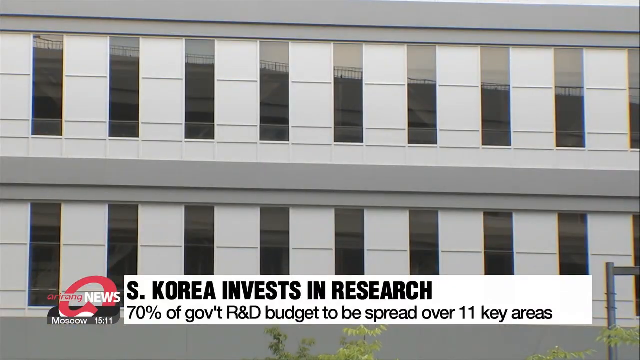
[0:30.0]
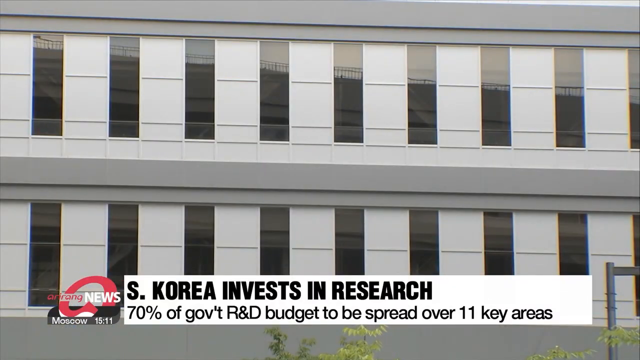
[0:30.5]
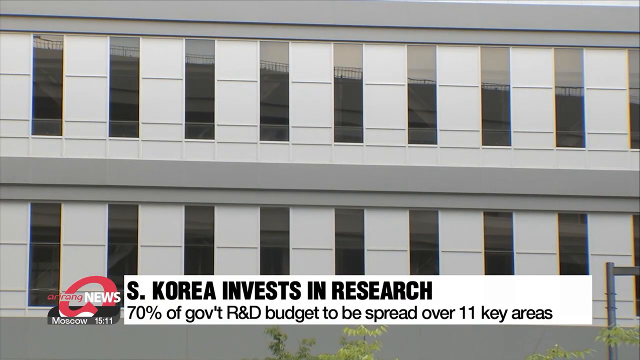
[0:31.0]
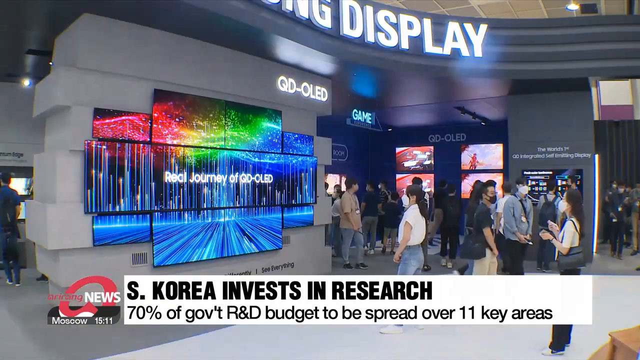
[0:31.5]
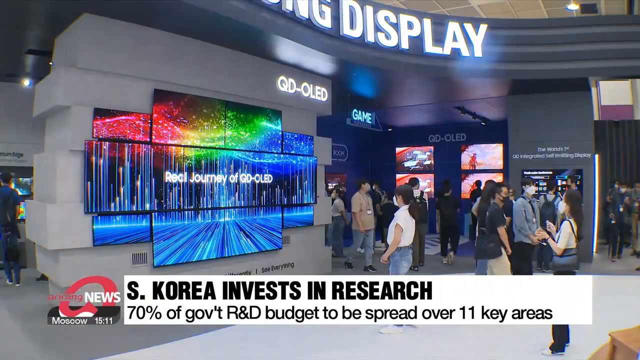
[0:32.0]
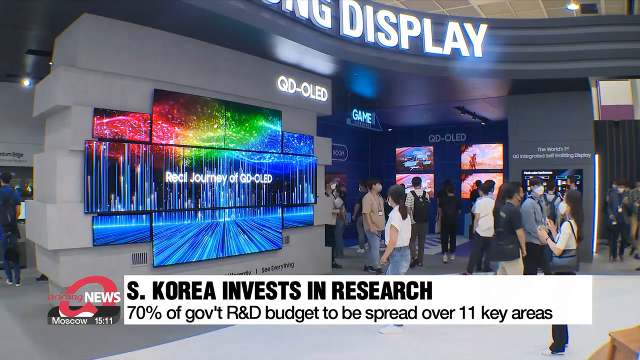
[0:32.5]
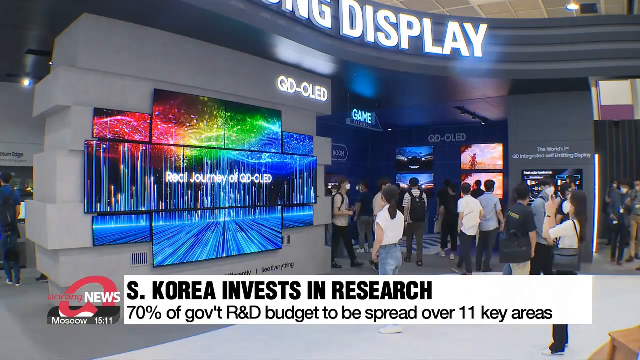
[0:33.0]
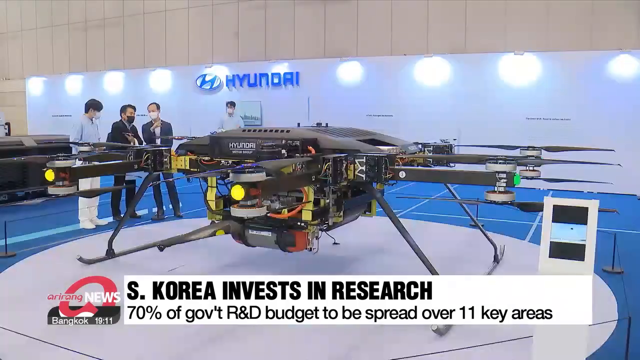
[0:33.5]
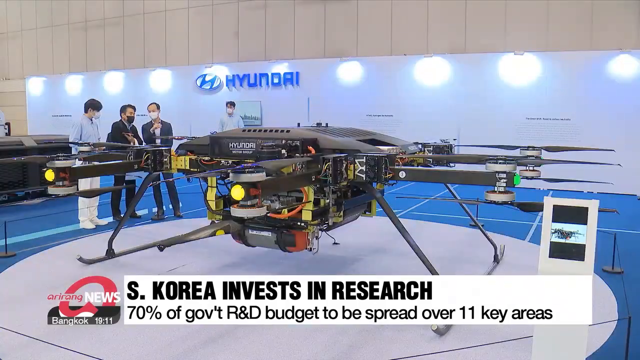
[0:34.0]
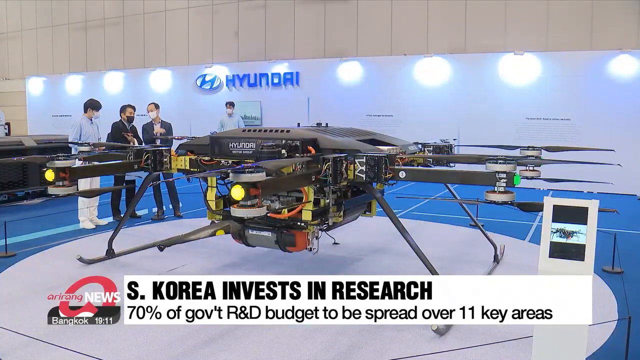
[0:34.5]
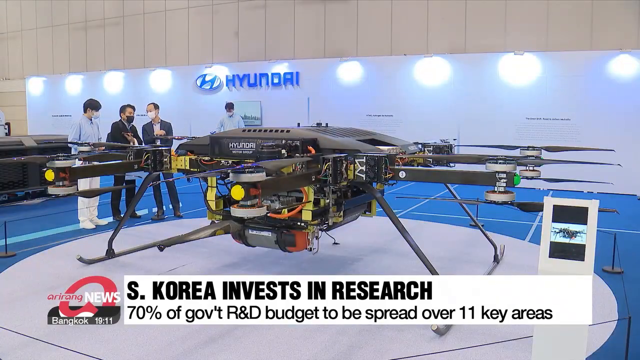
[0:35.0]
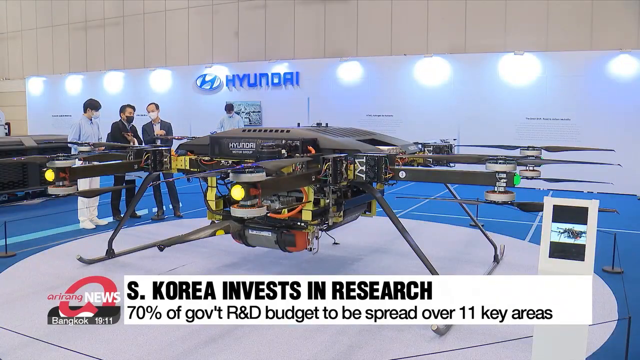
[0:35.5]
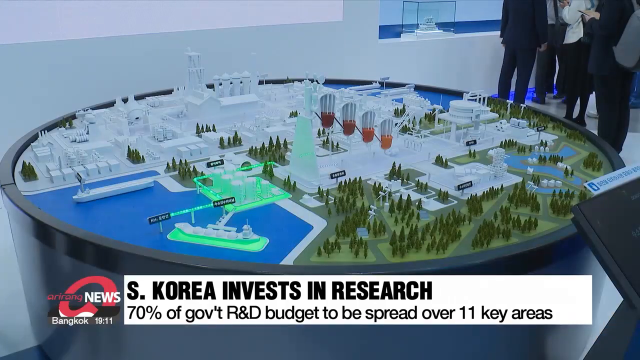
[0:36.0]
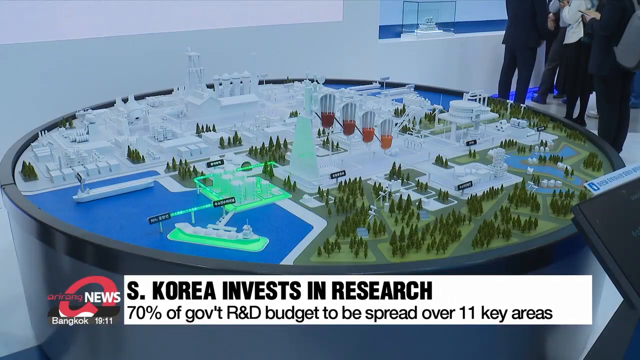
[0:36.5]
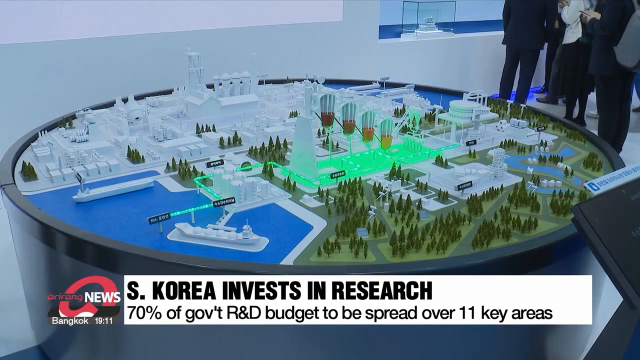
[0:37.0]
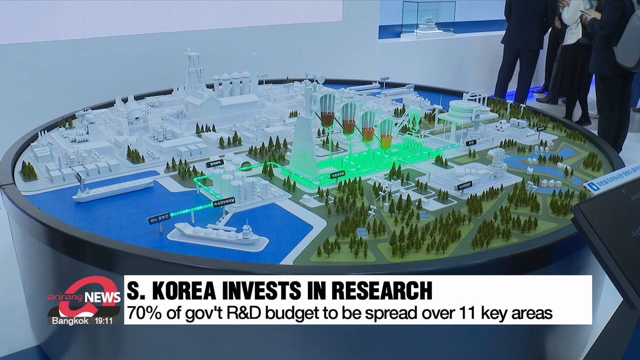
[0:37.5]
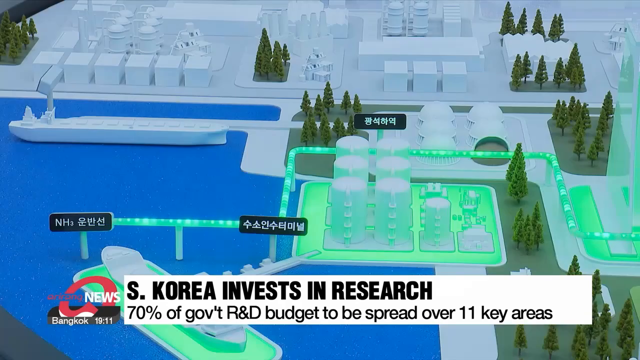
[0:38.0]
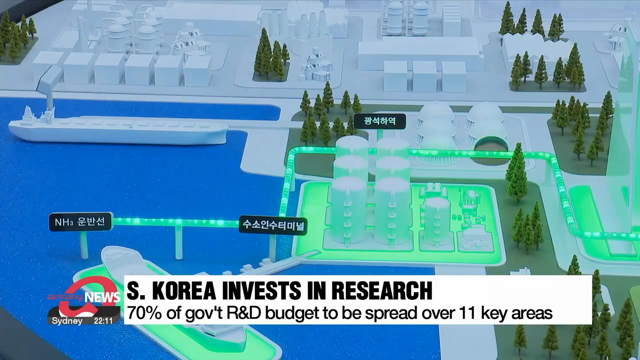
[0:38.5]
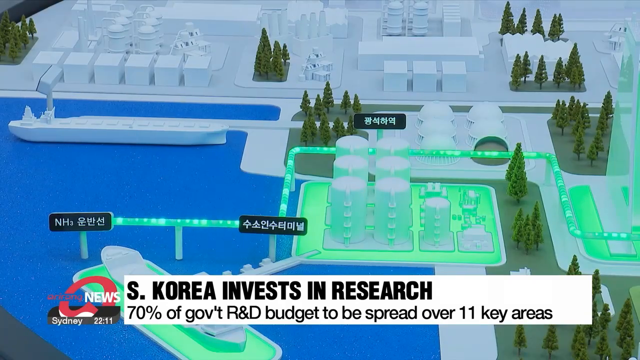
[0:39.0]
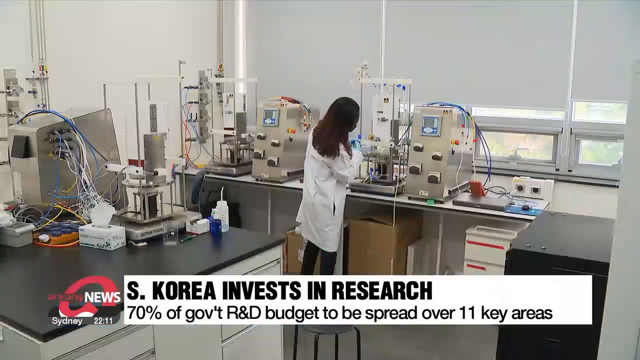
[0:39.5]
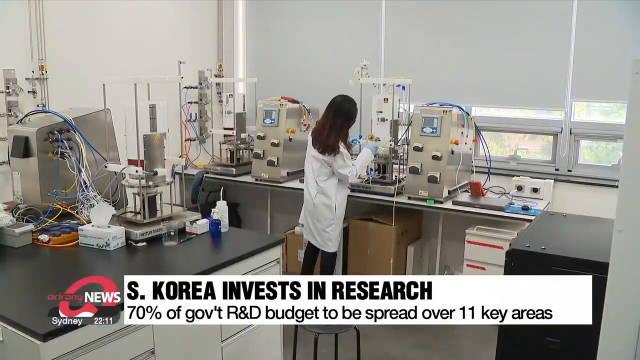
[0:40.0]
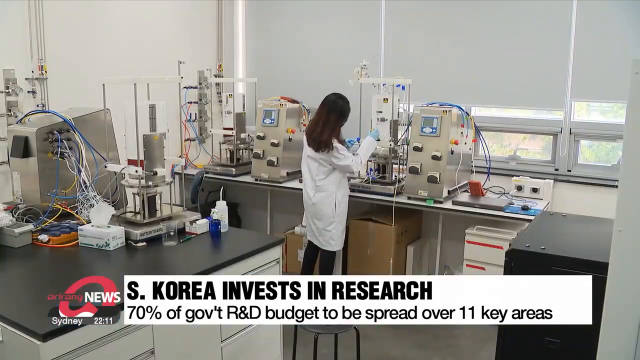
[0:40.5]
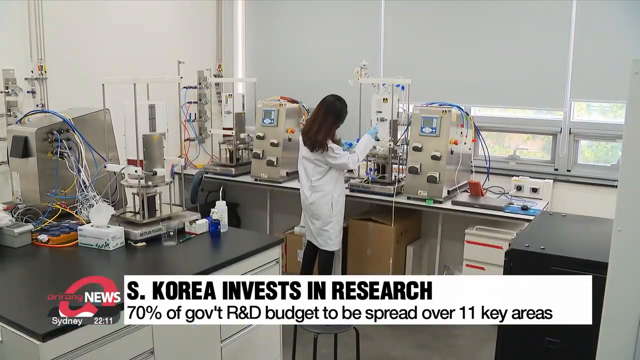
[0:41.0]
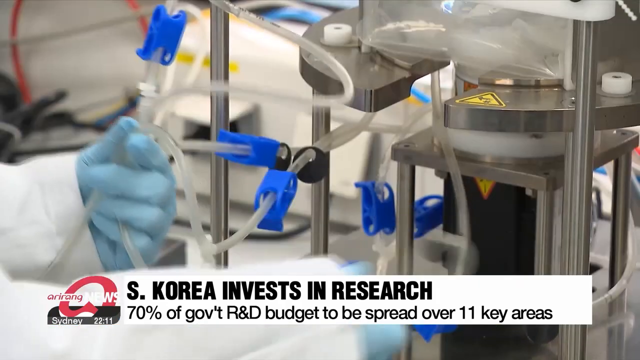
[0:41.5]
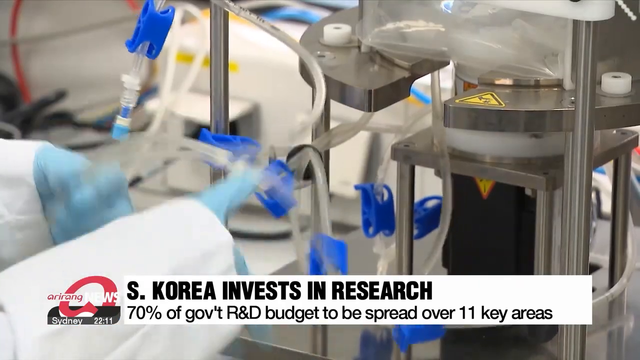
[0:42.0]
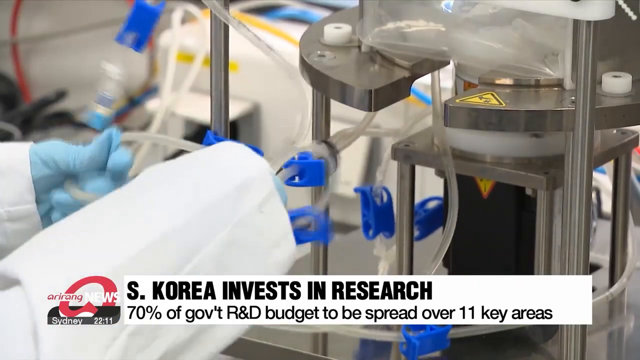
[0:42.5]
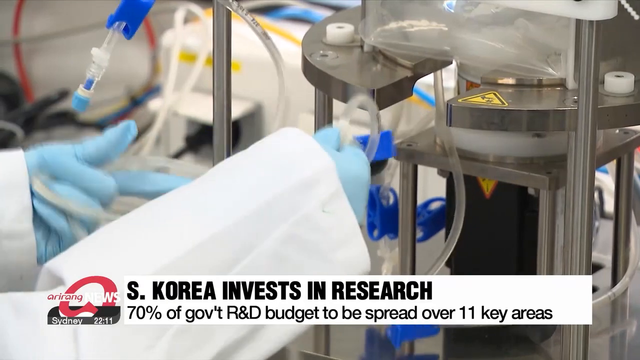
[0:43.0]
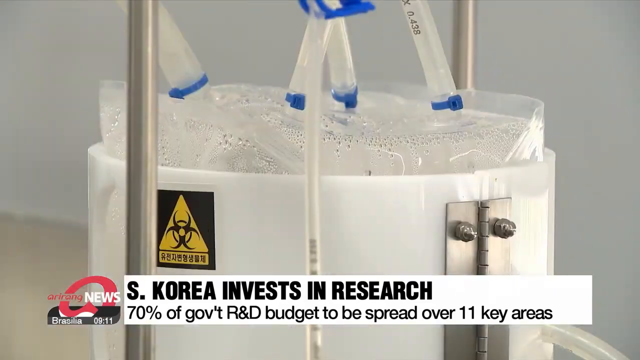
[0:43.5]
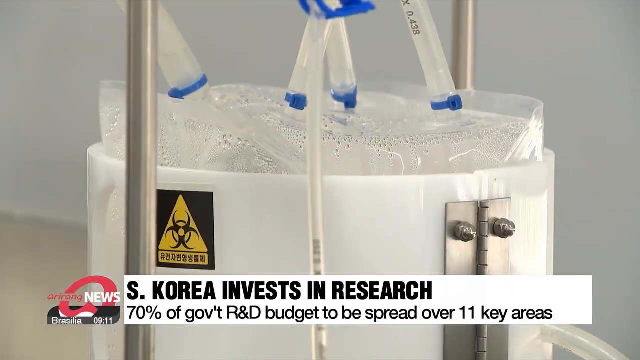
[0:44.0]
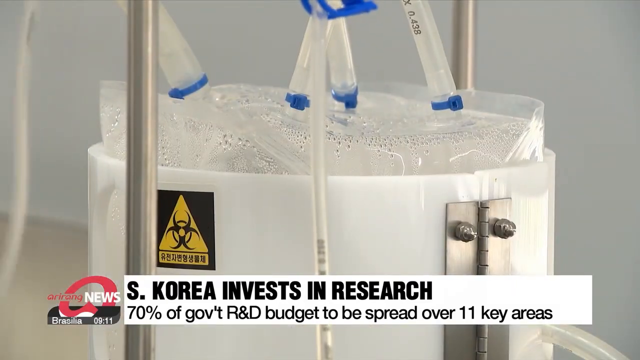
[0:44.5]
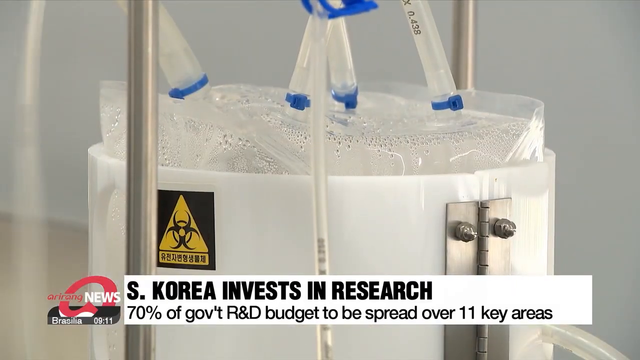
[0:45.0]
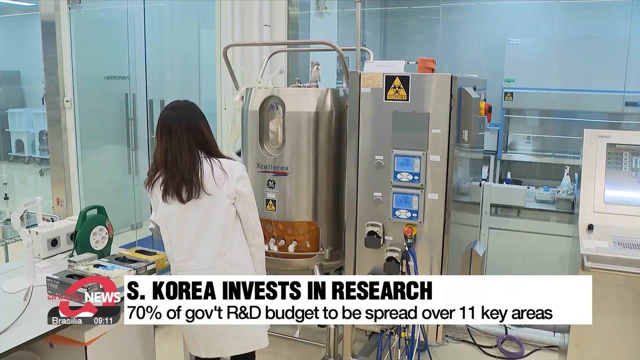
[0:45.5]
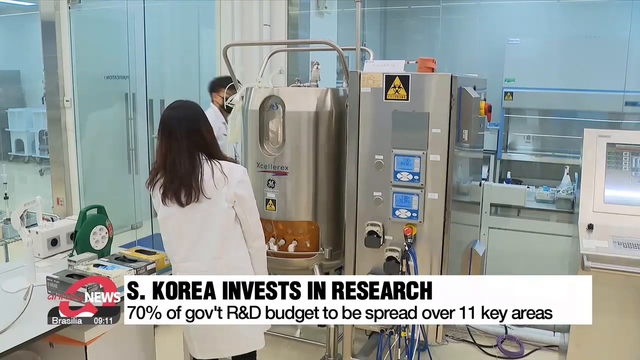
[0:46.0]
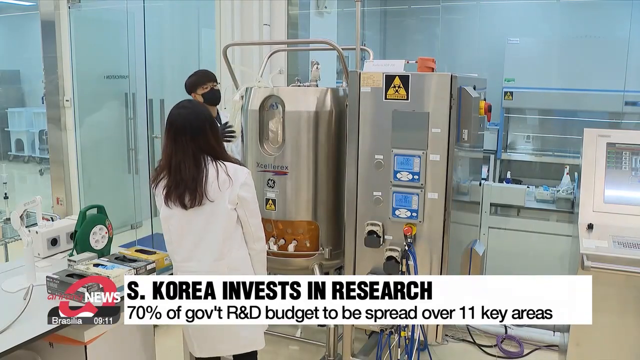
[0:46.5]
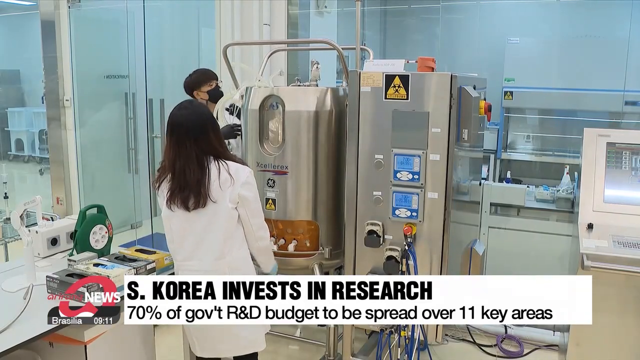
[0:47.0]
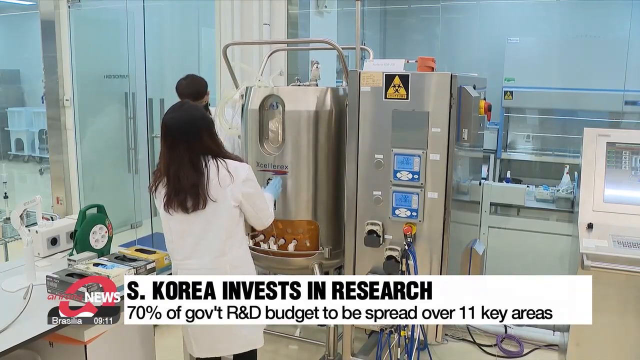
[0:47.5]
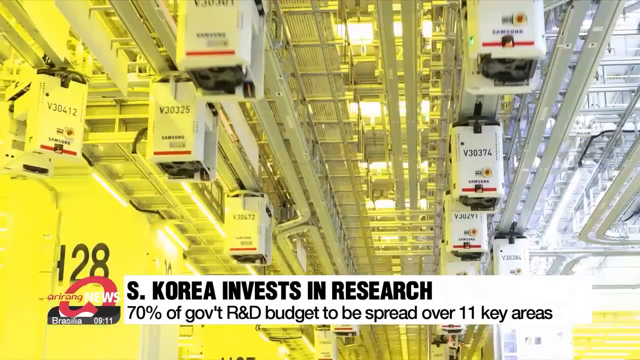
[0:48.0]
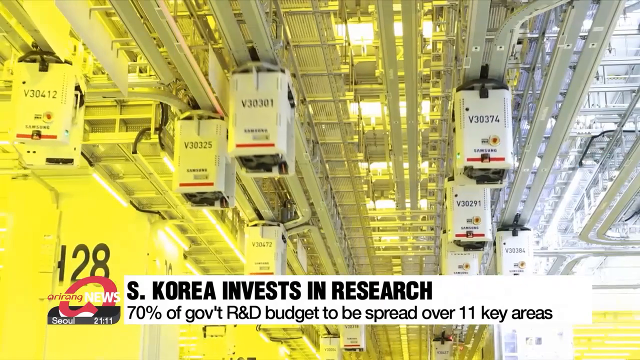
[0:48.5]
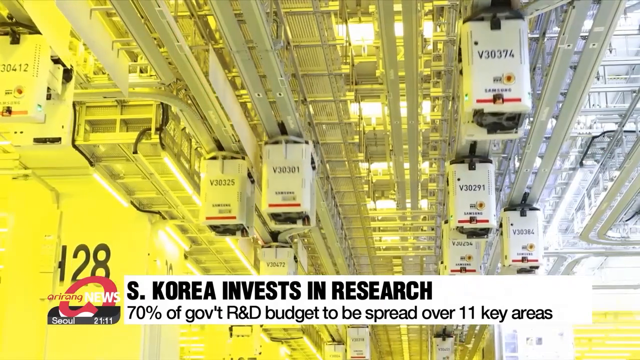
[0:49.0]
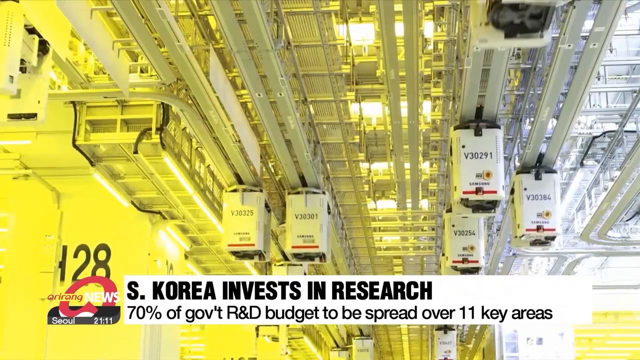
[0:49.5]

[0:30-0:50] After the windows, the view switches to an indoor space where many people are walking around among LED screens that appear to be showing examples of LED, with text reading "real journey of LED." More people walk past more LED screens, with text reading "QD OLED," and little TV screens cover the walls. Text reads "the world's first integrated self-" followed by a word that is hard to make out, and a sign reads "Game." A fairly large drone with the Hyundai logo on it, apparently made by Hyundai, is in a room with "Hyundai" up on the wall. Next comes a flat miniature model showing land, trees, roads, buildings, structures and water; a closer view shows trees and something green that extends out into the water and is kind of glowing. A woman in a white coat works in a lab with a bunch of tubes on a machine, and a man is in the lab with her; they are at a big silver machine. Finally, a bunch of things move along the top of a ceiling like an assembly line in a factory.